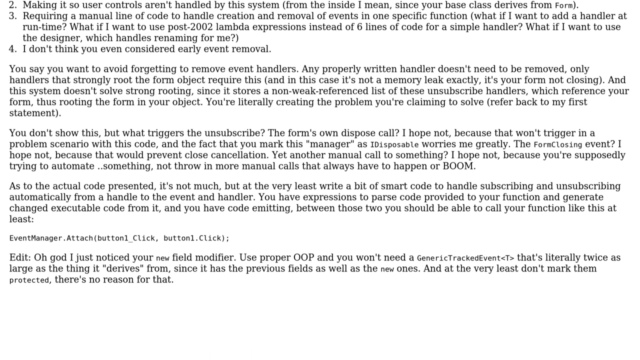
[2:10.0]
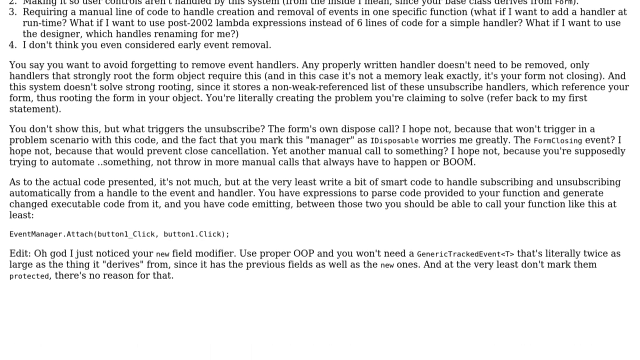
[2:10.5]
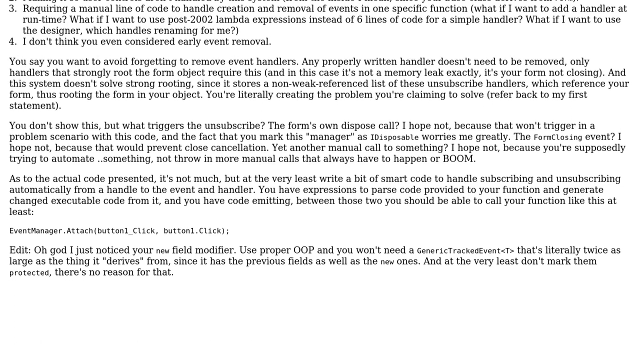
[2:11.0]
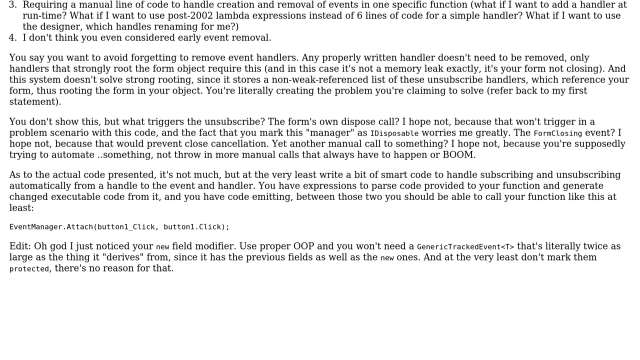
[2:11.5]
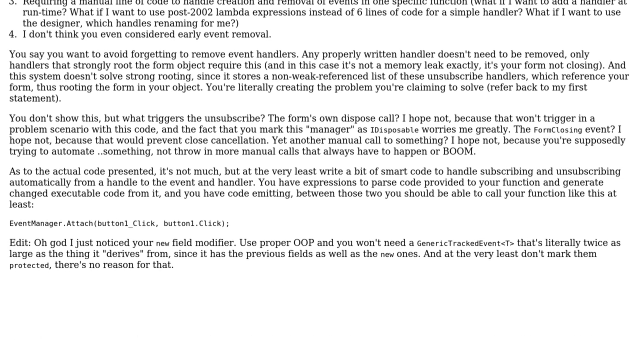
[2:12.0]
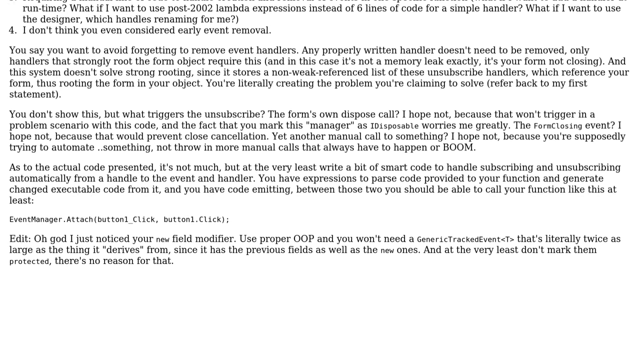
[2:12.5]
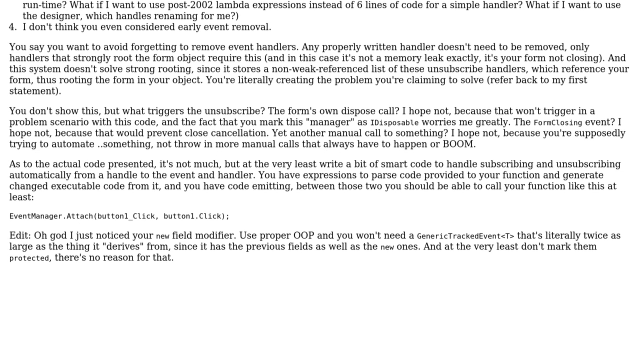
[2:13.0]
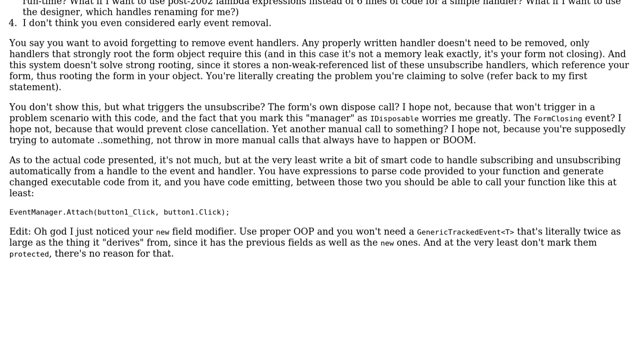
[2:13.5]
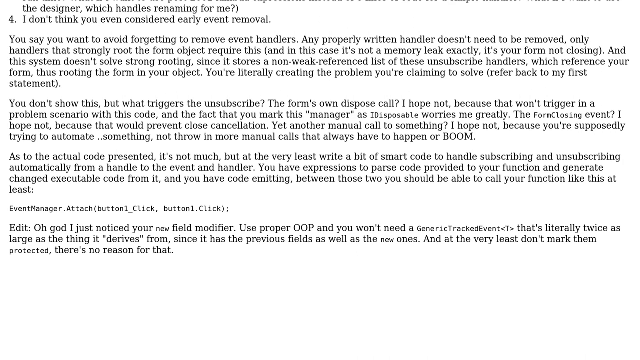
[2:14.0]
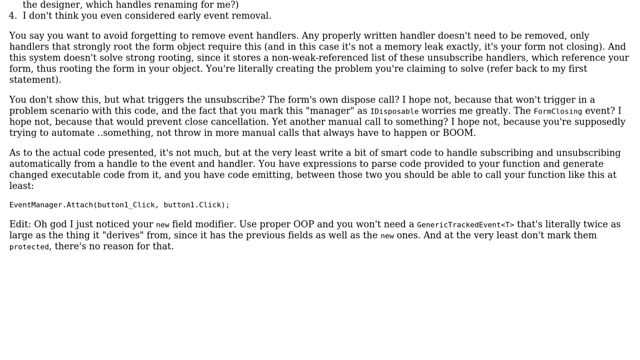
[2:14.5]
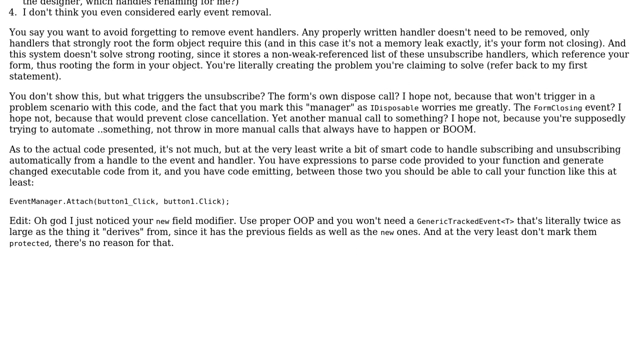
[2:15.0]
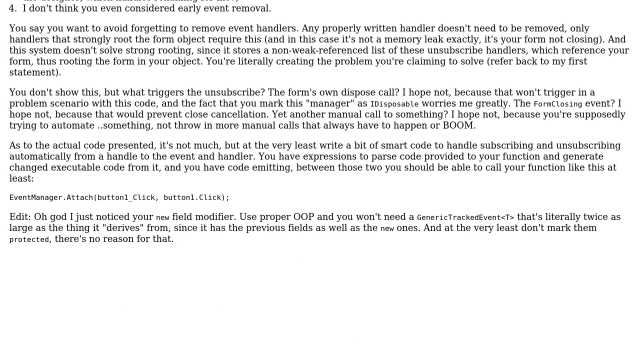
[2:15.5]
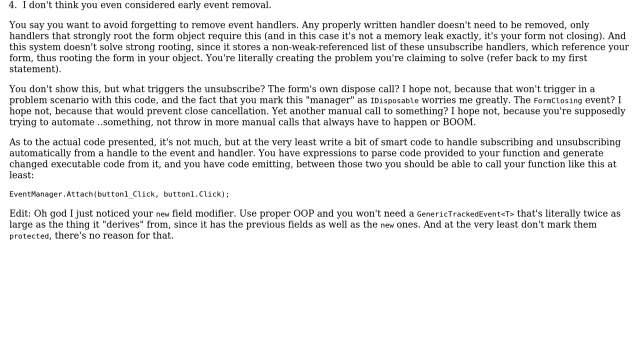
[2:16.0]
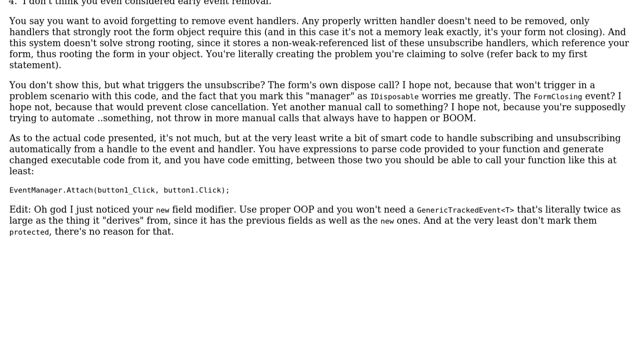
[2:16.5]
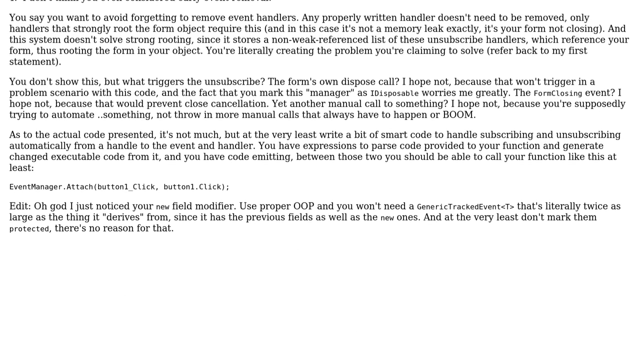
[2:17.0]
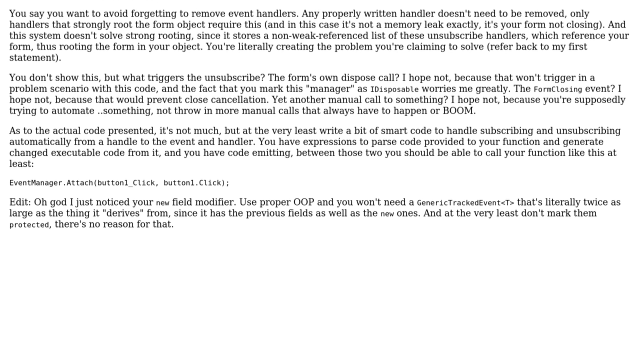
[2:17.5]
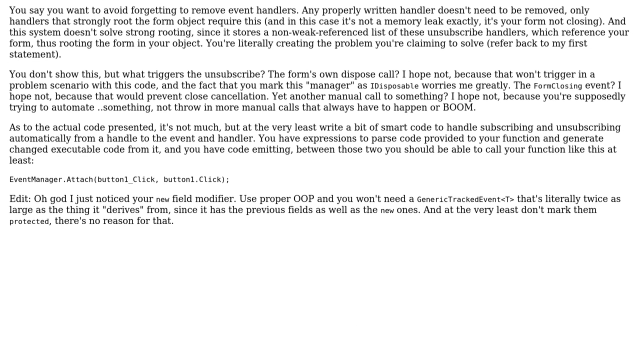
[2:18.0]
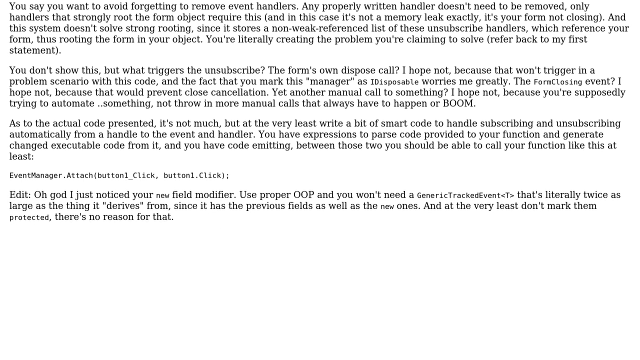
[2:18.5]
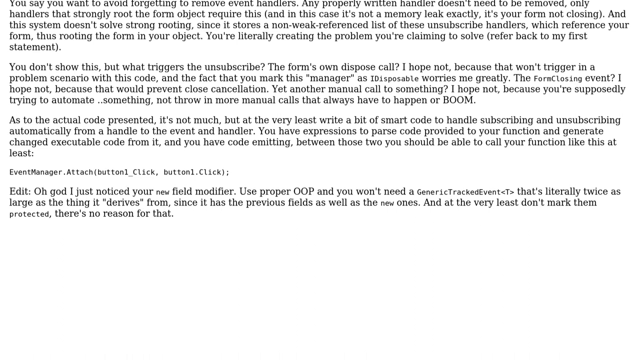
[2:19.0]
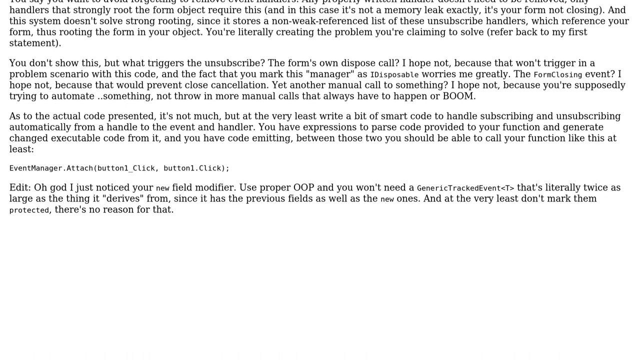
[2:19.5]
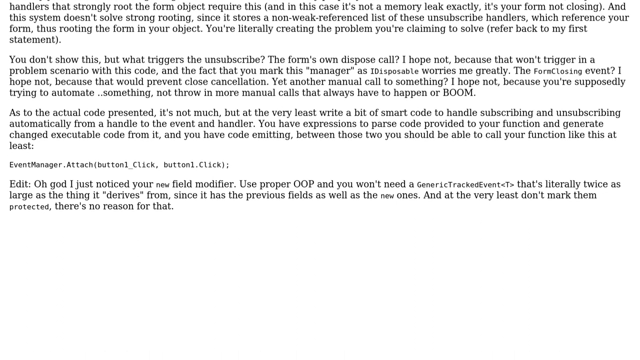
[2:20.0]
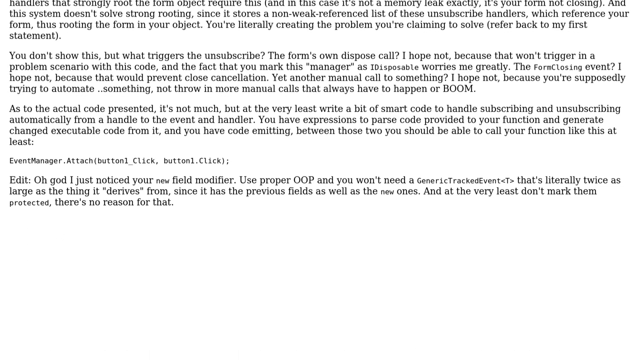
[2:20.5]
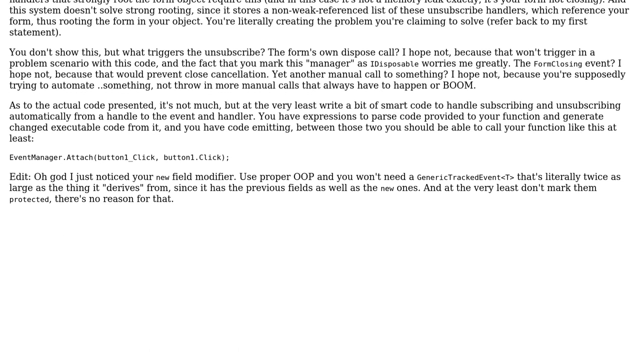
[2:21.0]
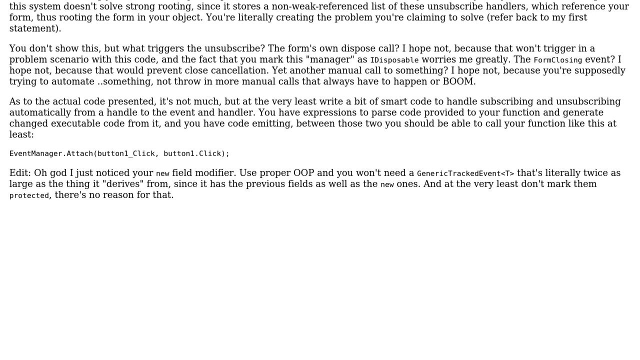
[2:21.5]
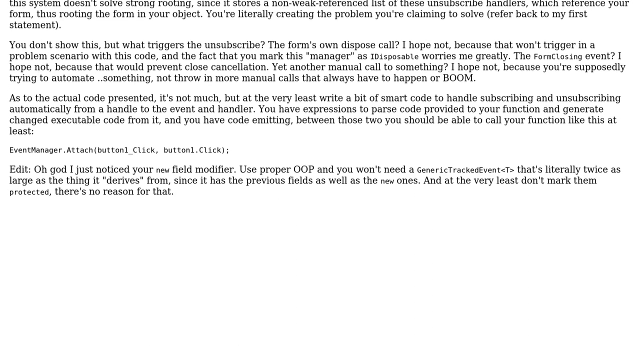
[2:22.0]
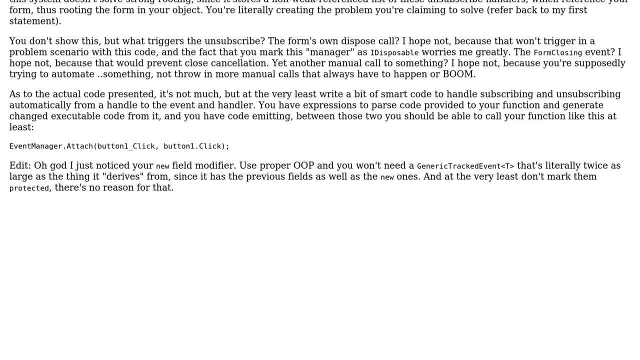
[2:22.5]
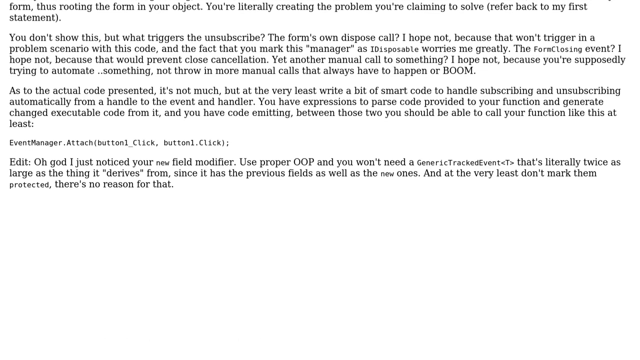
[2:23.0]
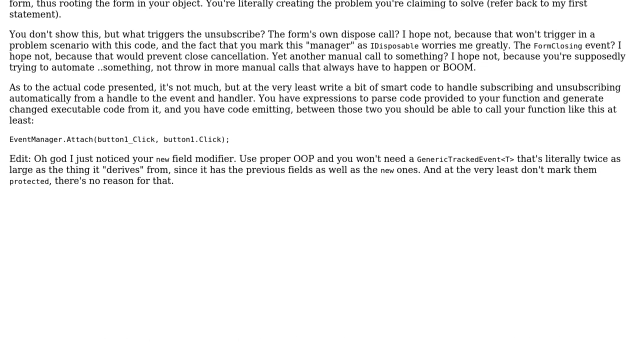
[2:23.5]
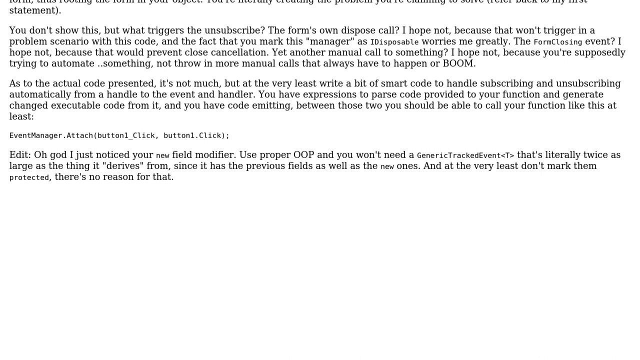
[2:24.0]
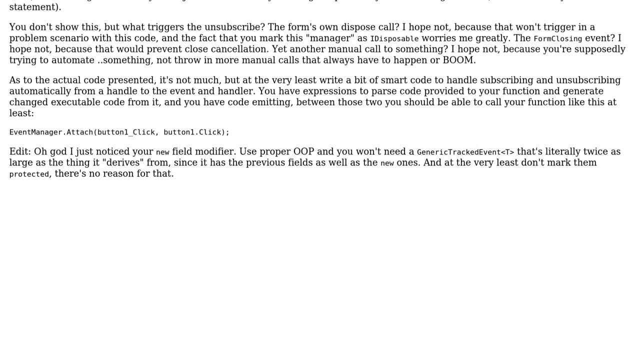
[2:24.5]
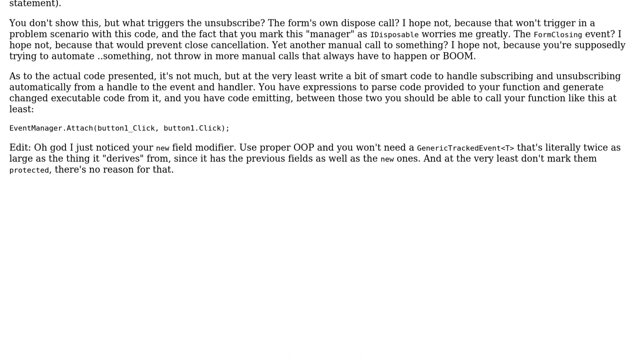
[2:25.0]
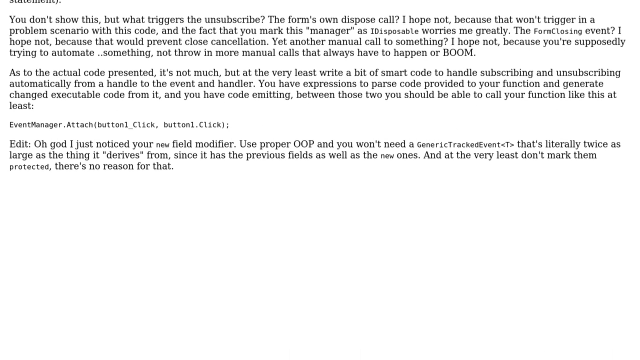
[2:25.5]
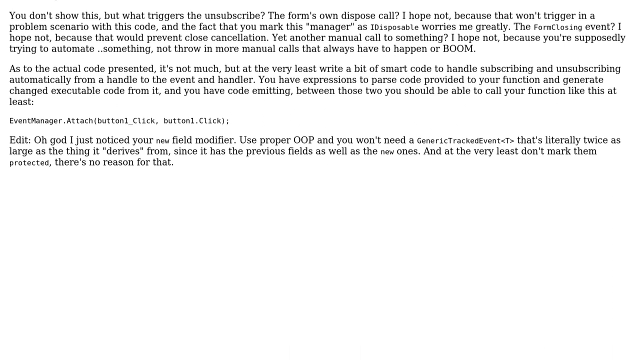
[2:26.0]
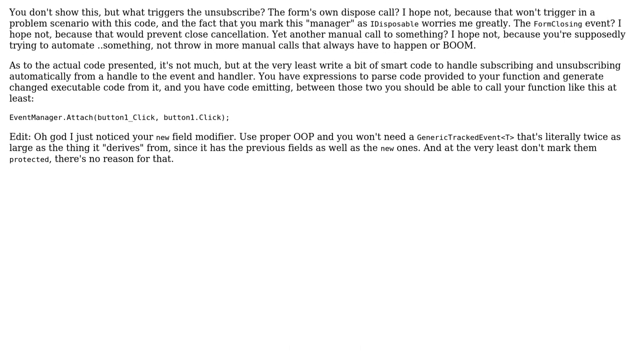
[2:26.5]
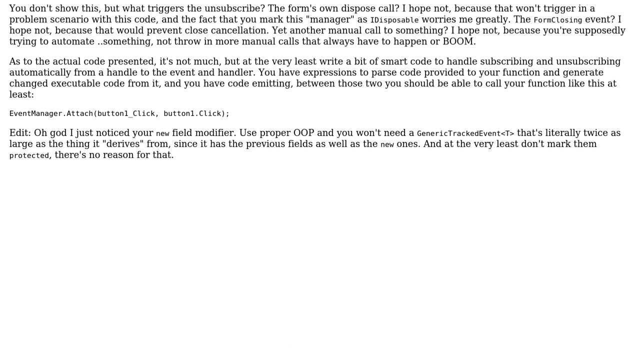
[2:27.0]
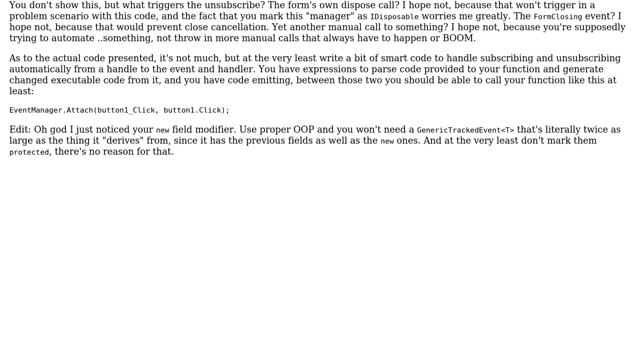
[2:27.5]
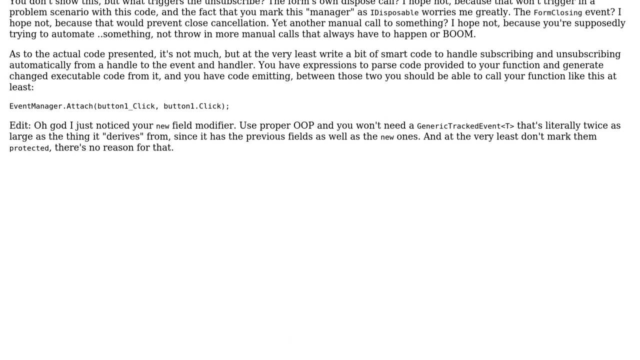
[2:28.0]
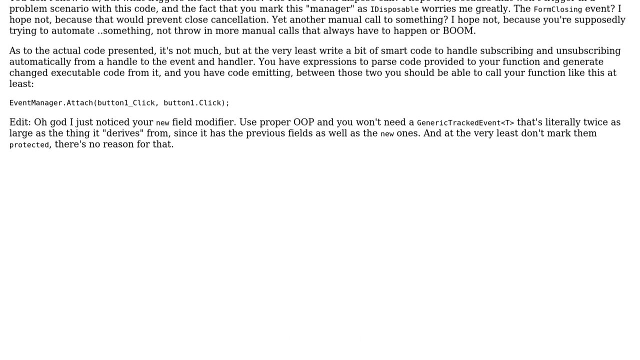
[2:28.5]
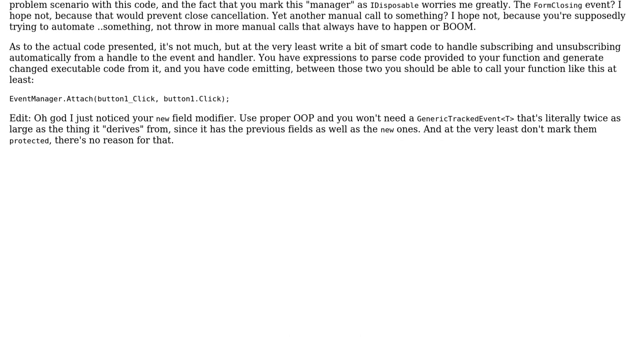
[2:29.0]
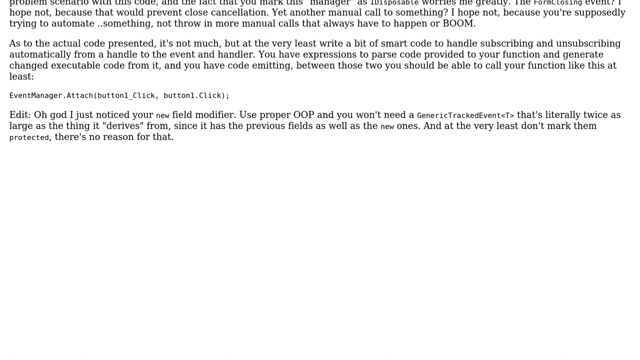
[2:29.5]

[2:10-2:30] A white page is covered entirely with very small black writing, with four bulleted numbered points in the middle of the paragraphs. Only numbers two, three and four are visible starting at the top; number one is completely cut off. Number two says "making it so user controls aren't handled by this system, from the inside I mean, since your base class derives from form." Number three says "requiring a manual line of code to handle creations and removal of events in one specific function," followed by questions in parentheses beginning "what if I was to." Number four says "I don't think you even considered early event removal." Below that are some very small paragraphs of regular writing, and the page slowly scrolls all the way to the bottom, showing there is nothing below these paragraphs.